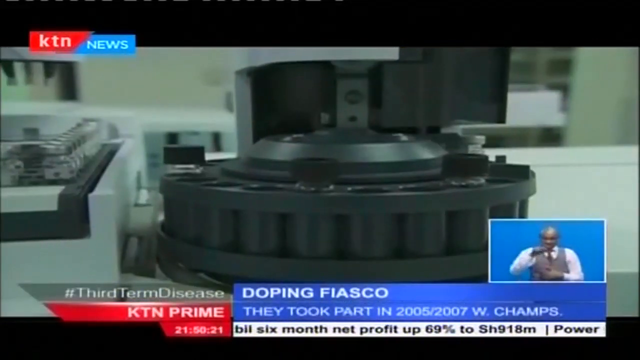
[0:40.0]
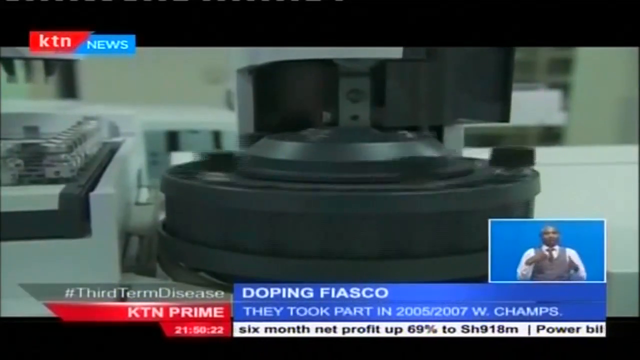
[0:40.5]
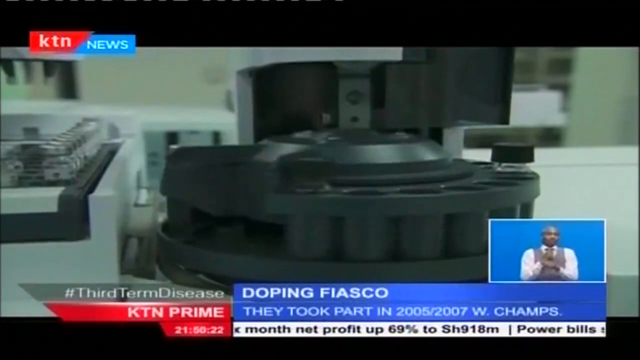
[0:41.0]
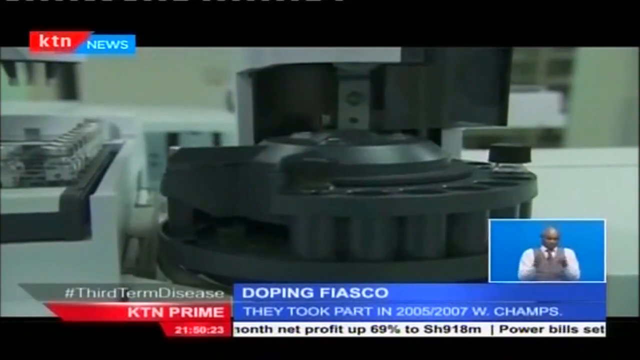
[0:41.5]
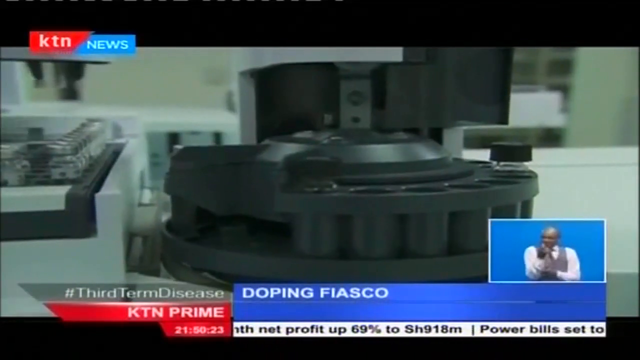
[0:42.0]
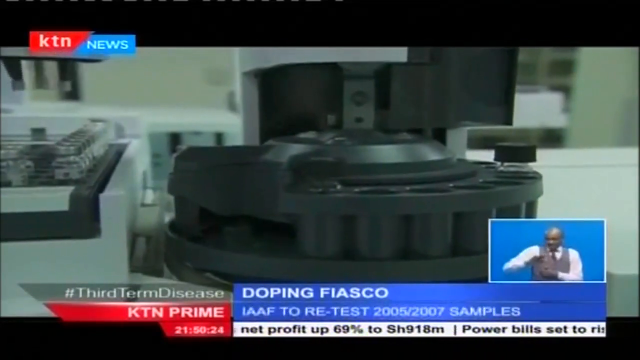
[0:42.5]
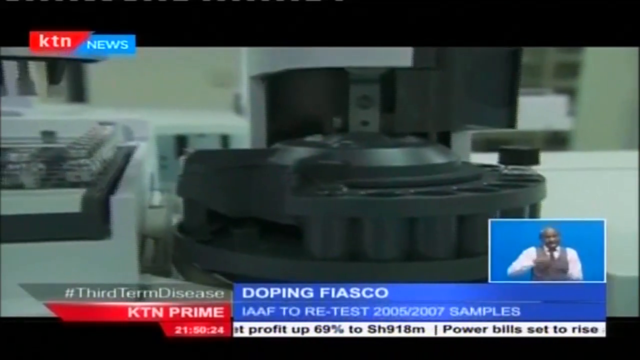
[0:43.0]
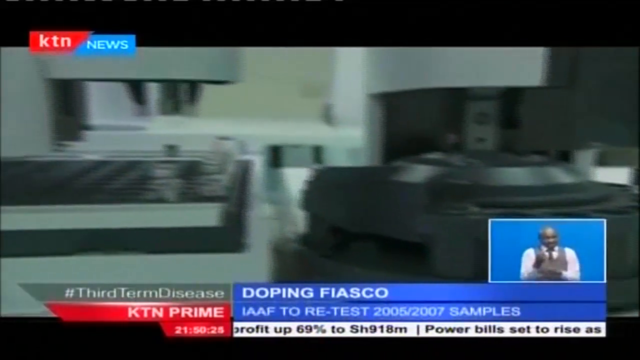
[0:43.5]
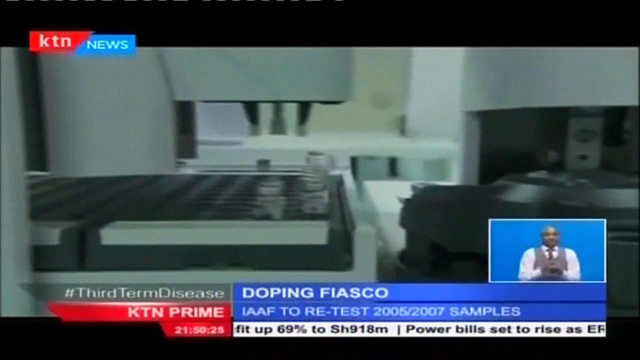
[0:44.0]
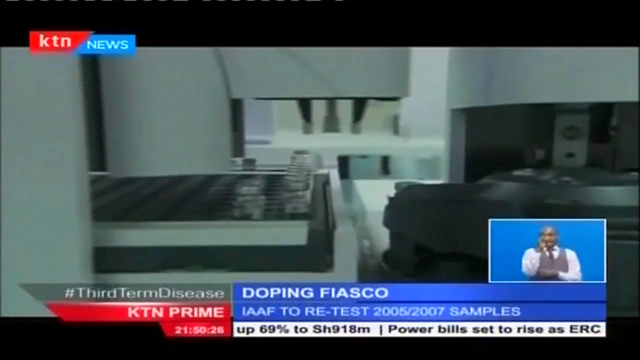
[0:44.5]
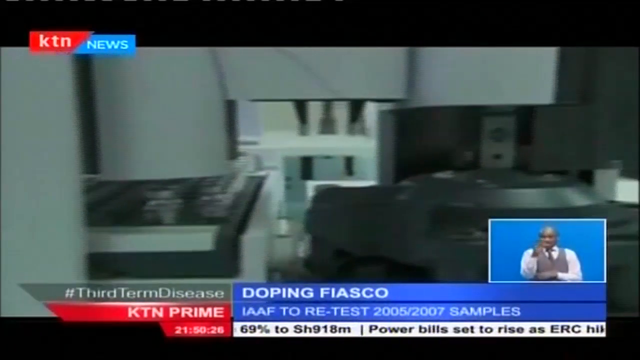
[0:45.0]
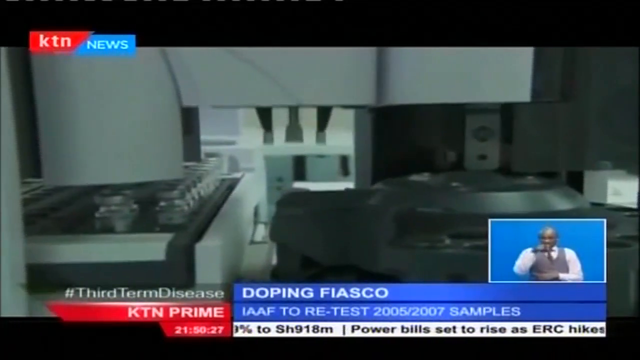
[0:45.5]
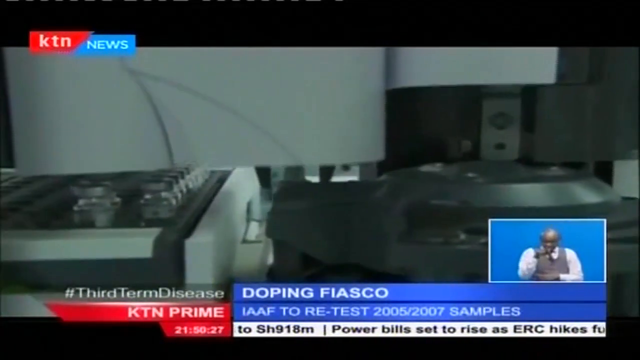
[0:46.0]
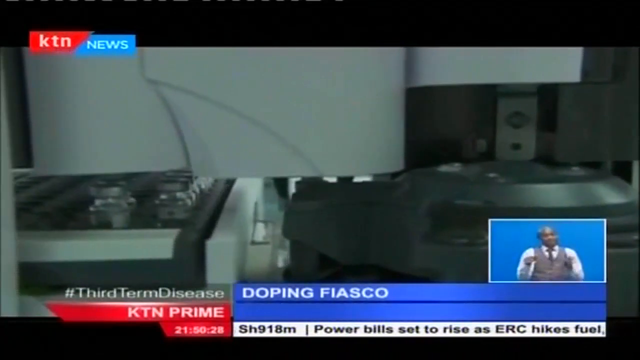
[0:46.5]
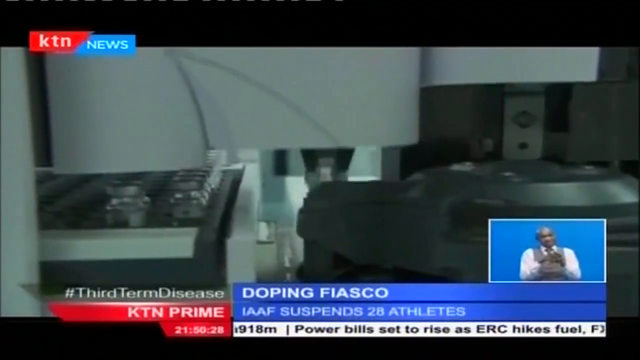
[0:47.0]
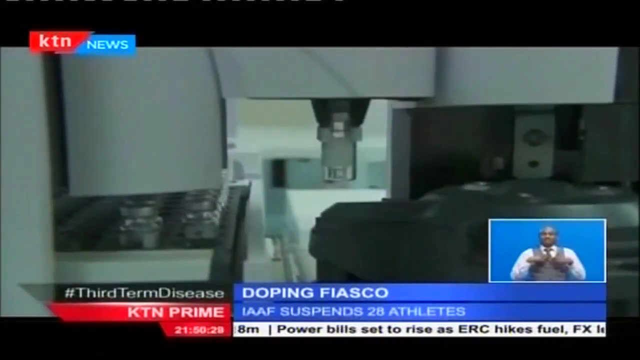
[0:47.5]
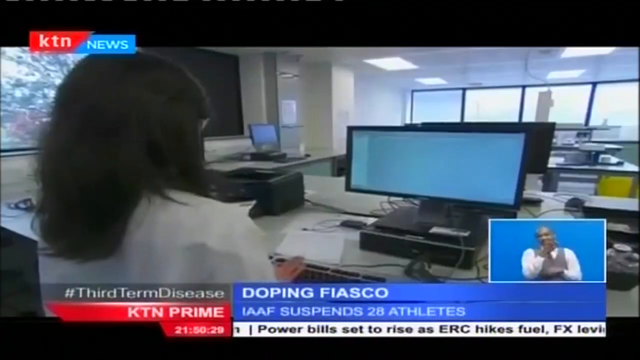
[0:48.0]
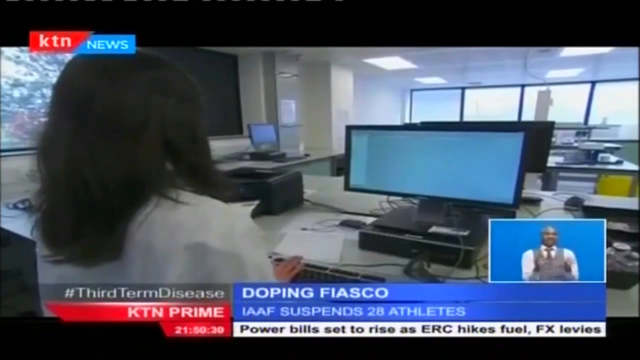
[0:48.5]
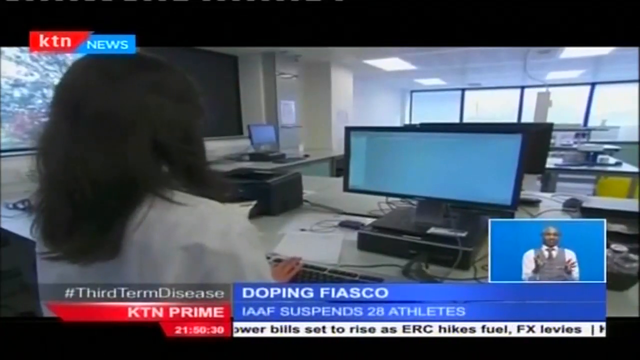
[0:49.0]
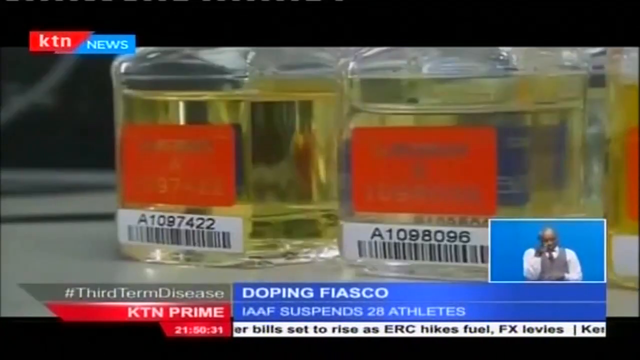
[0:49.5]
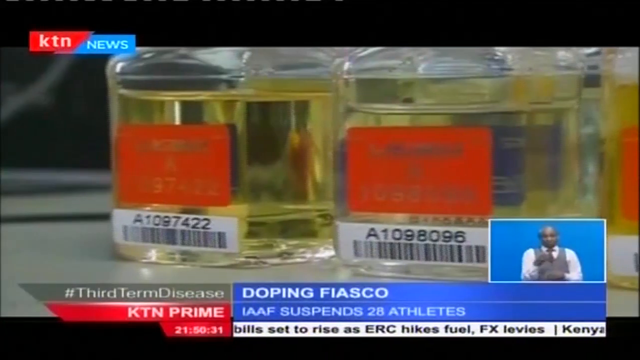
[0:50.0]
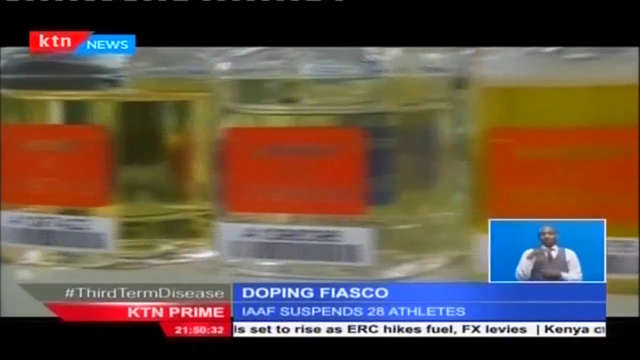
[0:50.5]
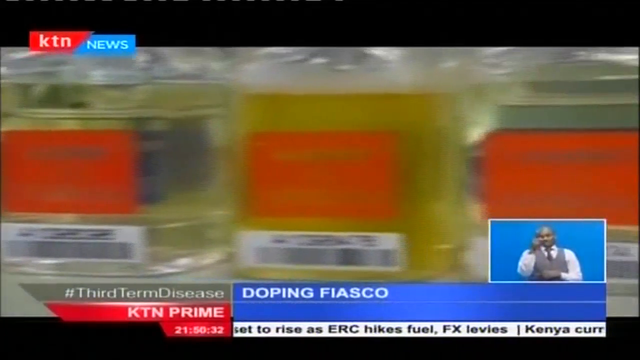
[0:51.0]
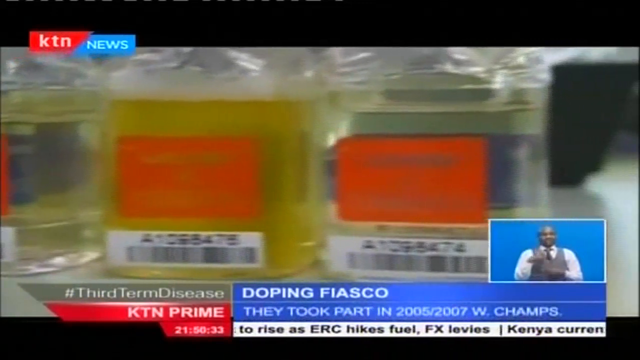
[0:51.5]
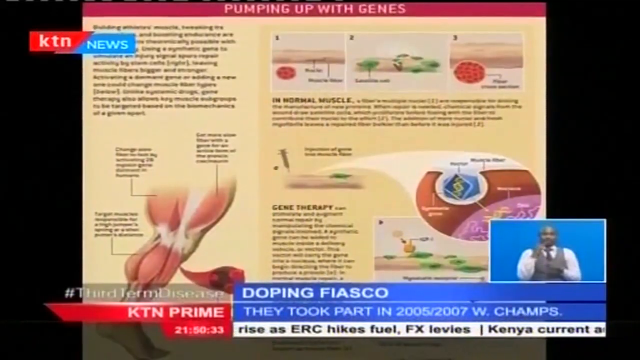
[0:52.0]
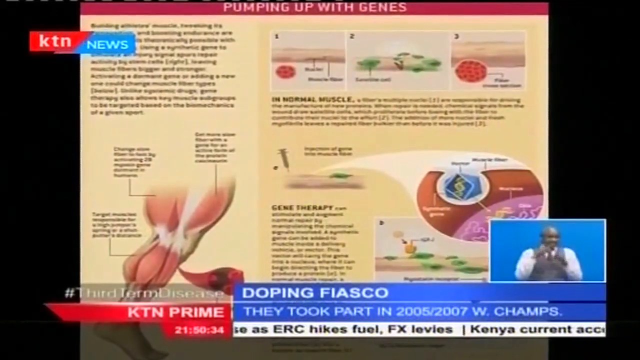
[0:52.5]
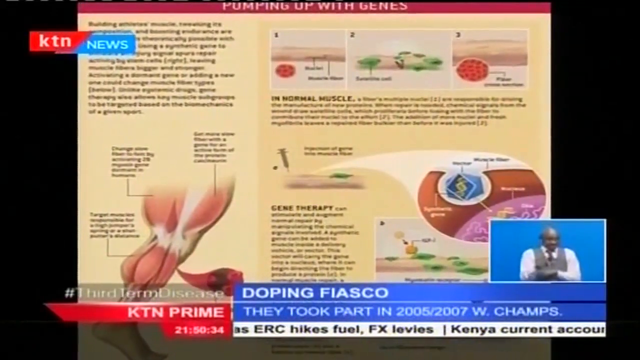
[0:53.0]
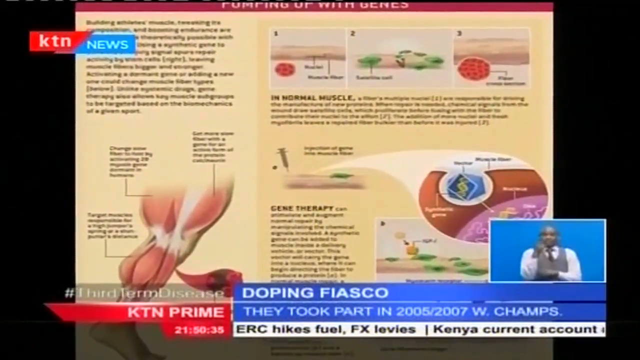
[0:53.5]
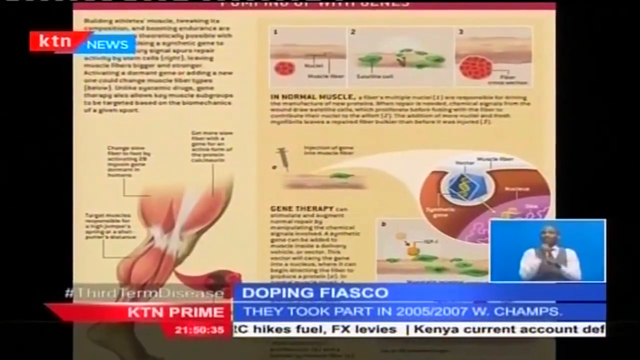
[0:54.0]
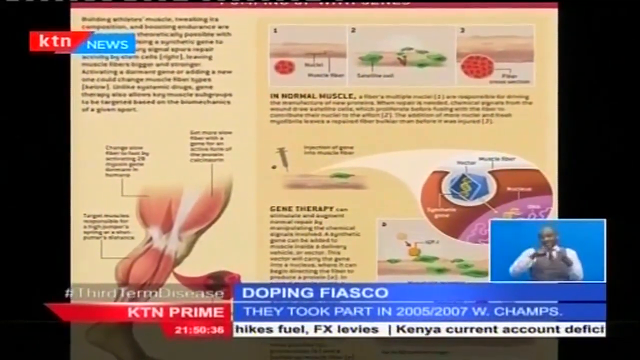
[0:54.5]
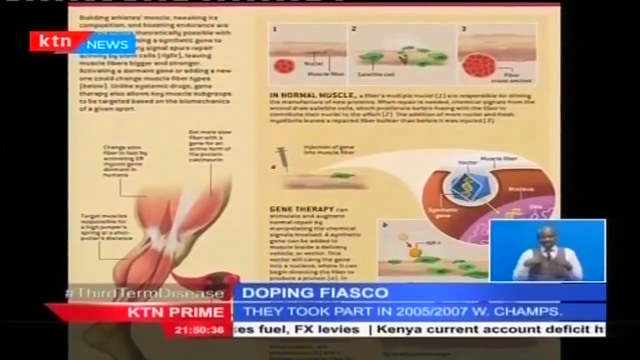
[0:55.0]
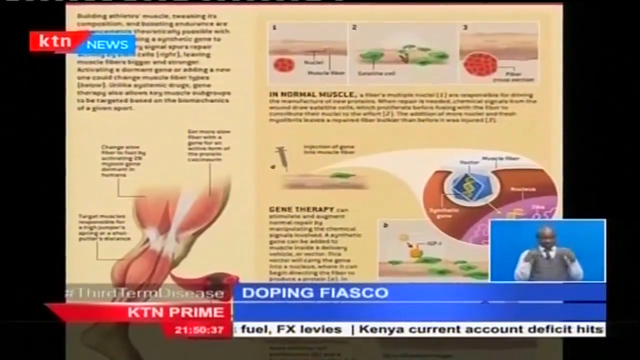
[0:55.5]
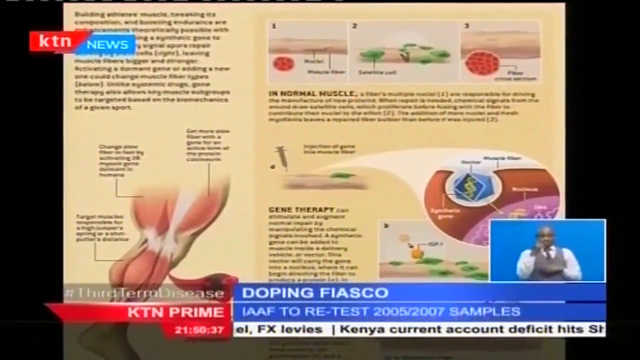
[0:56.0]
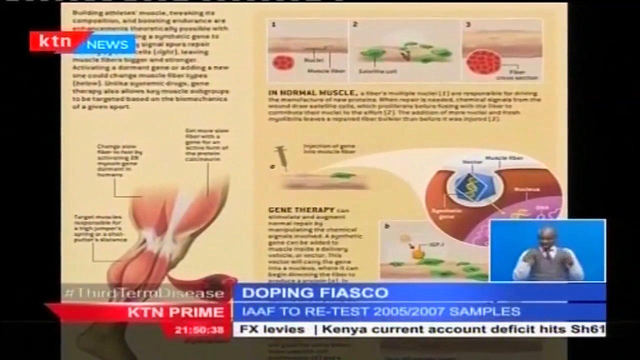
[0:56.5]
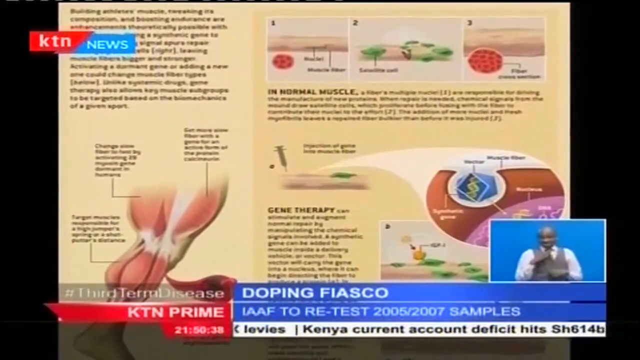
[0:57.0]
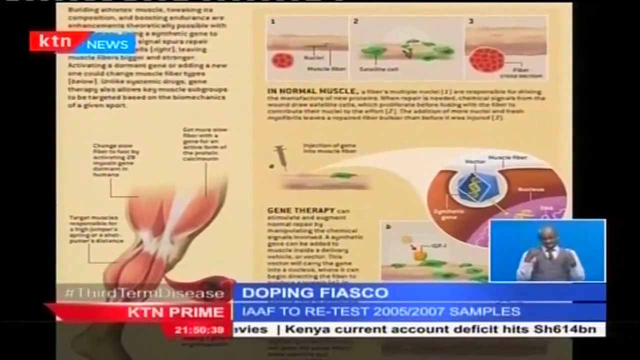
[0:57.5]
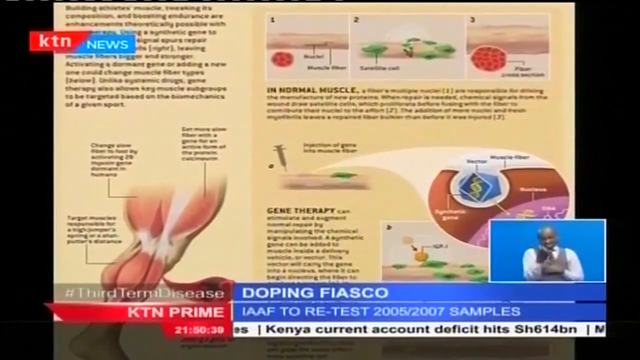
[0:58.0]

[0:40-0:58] Samples are seen being sent and taken to what looks like a book showing DNA and some other information needed as the testing is conducted. On-screen text about the re-testing strategy appears, stating that the people cannot be named yet as it is a legal matter, and mentioning 28 of those people in connection with the findings of the new retesting strategy.